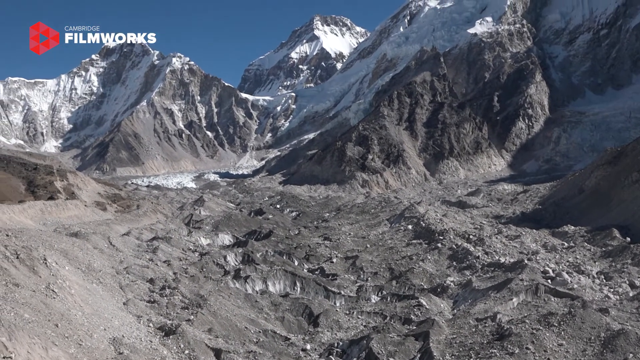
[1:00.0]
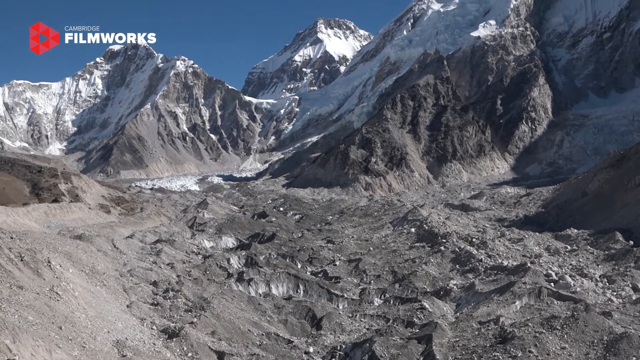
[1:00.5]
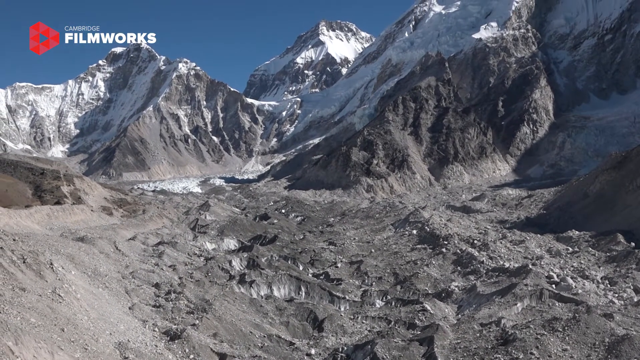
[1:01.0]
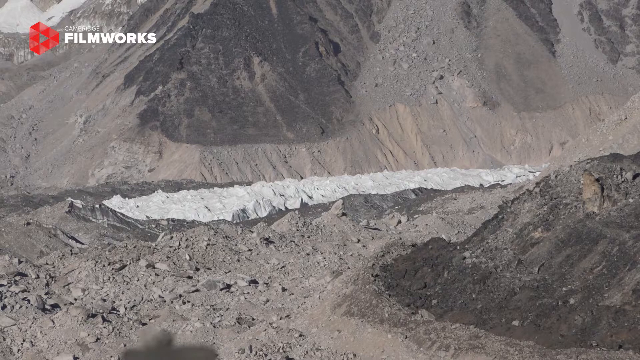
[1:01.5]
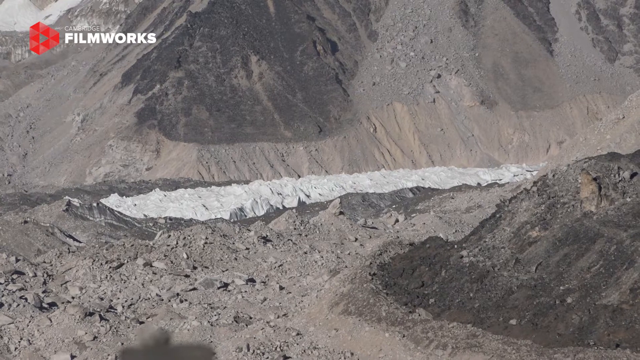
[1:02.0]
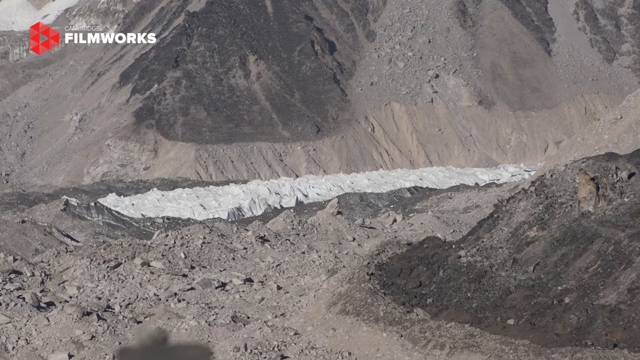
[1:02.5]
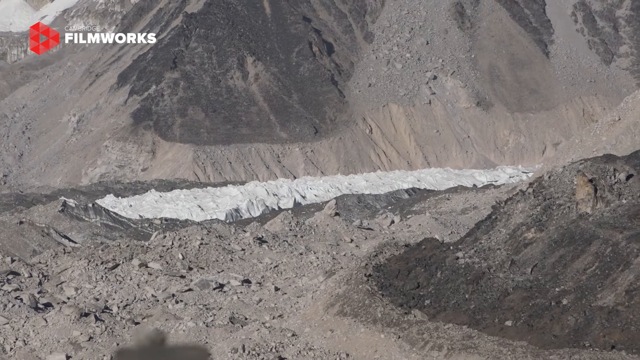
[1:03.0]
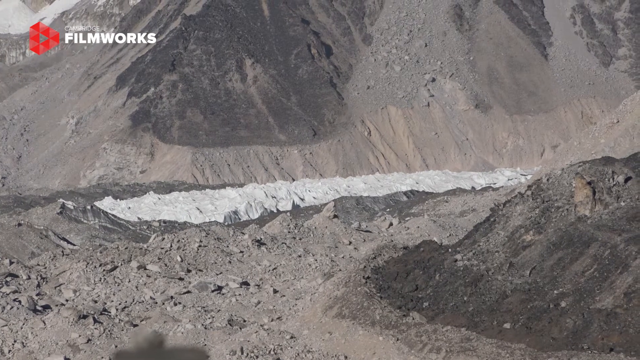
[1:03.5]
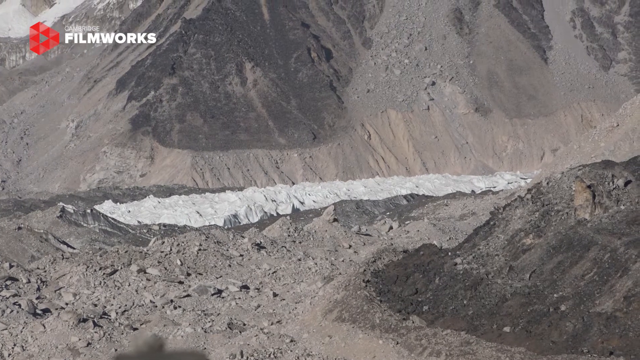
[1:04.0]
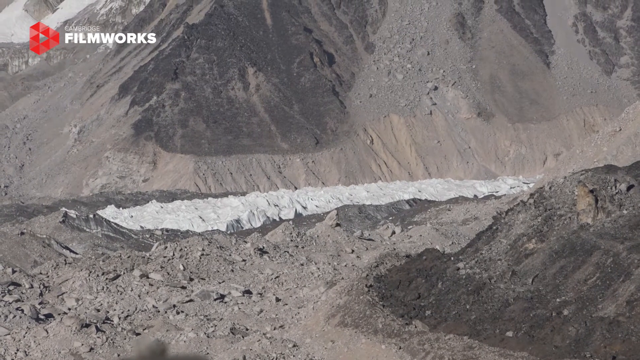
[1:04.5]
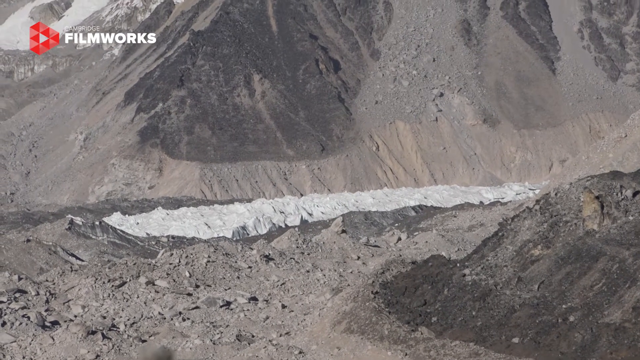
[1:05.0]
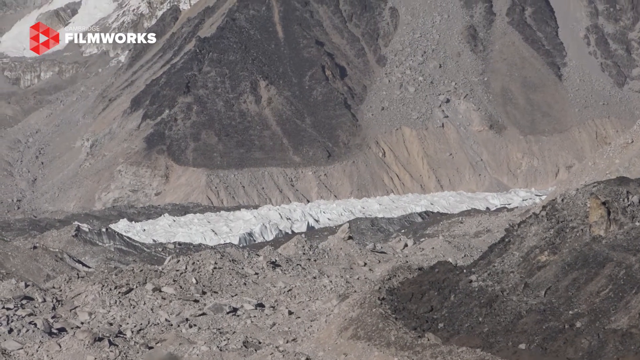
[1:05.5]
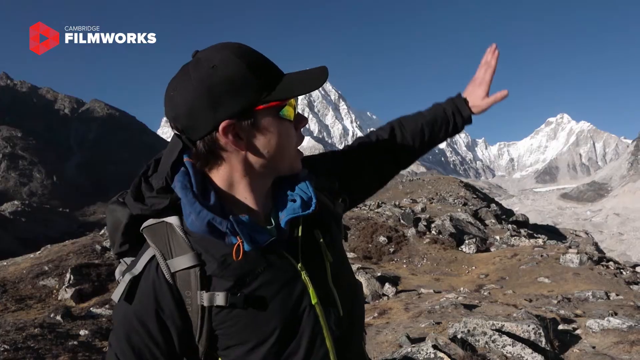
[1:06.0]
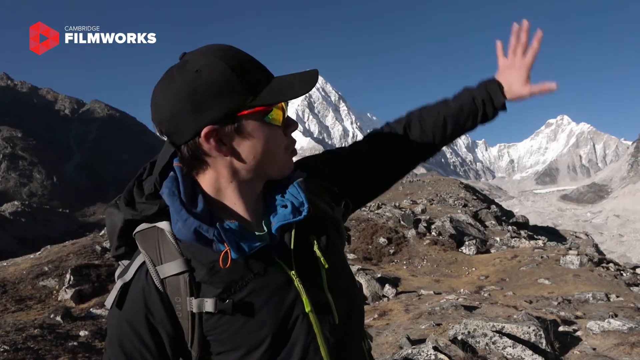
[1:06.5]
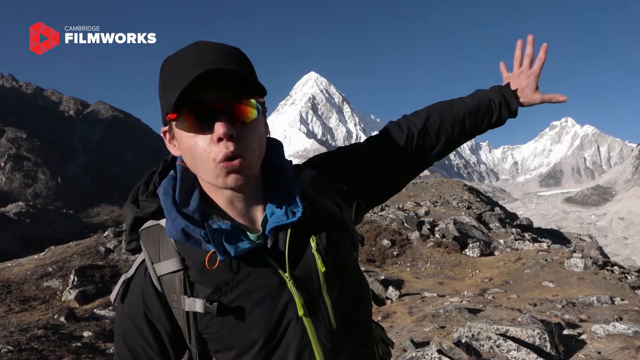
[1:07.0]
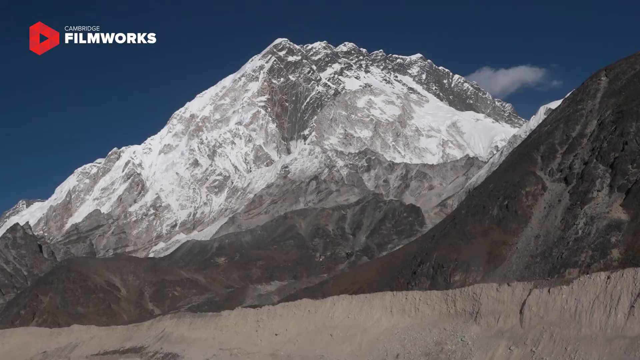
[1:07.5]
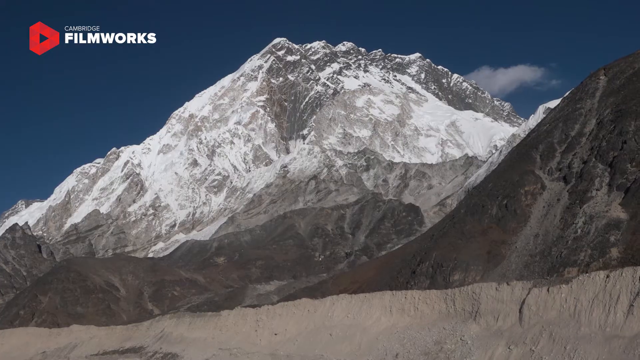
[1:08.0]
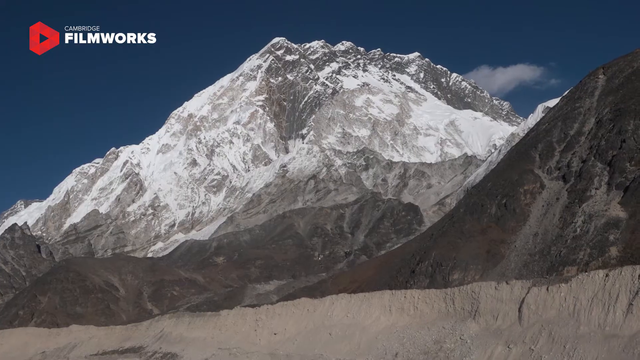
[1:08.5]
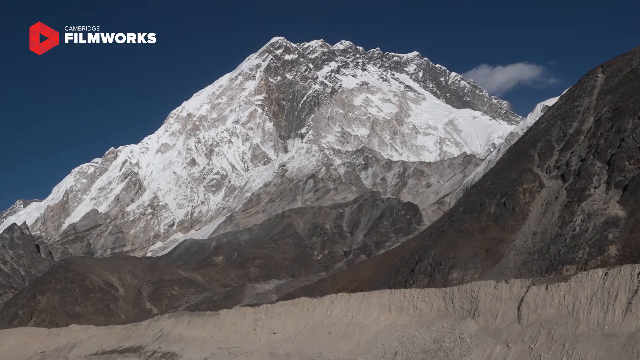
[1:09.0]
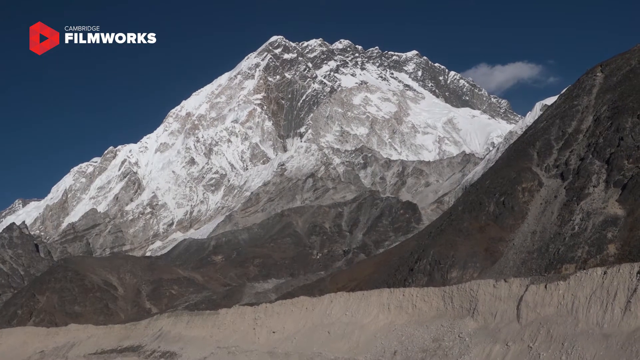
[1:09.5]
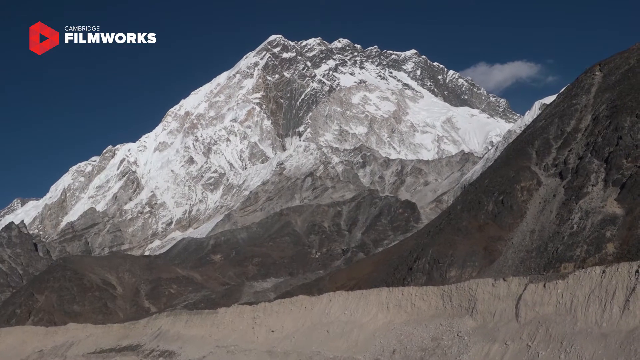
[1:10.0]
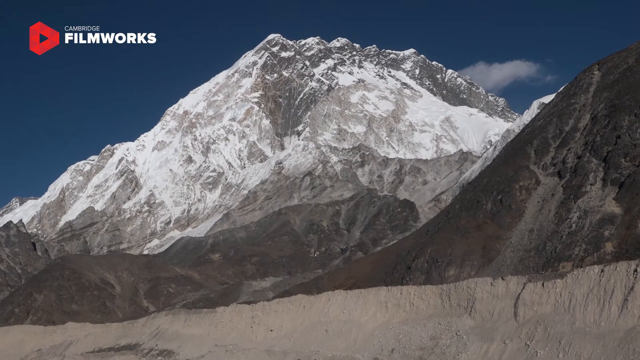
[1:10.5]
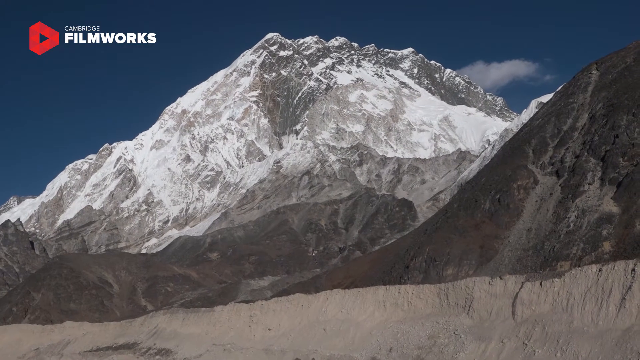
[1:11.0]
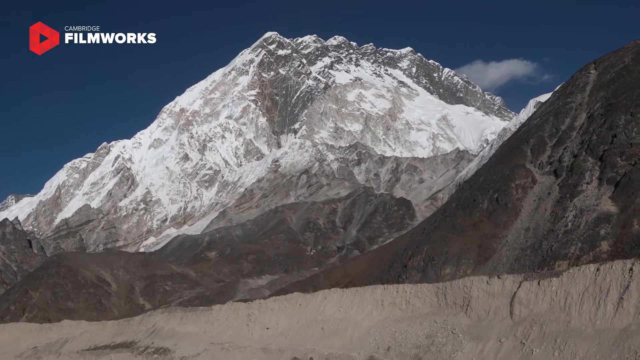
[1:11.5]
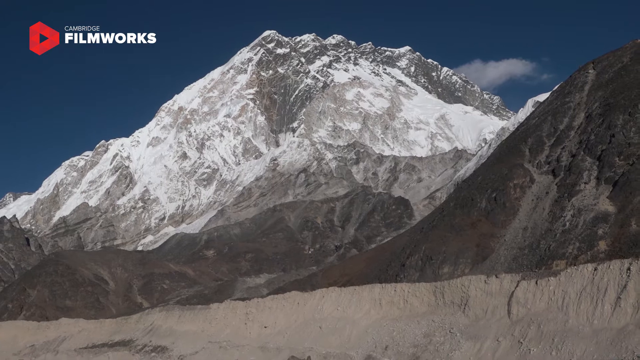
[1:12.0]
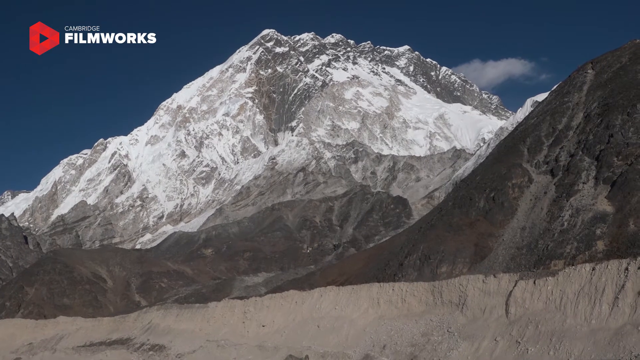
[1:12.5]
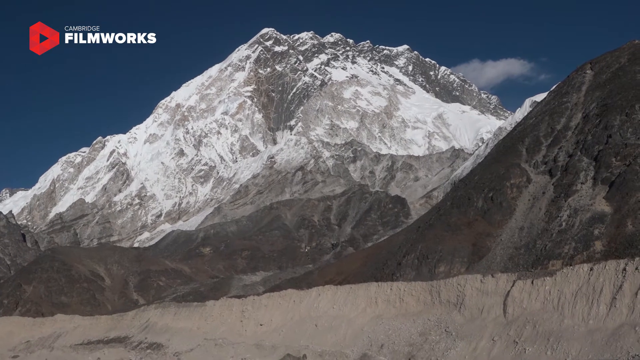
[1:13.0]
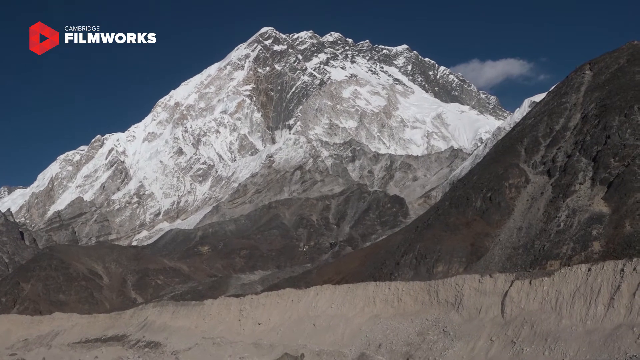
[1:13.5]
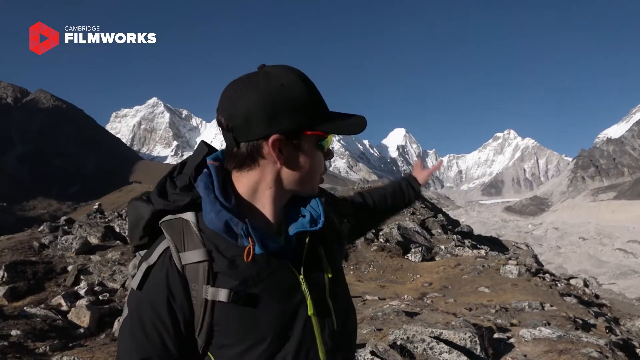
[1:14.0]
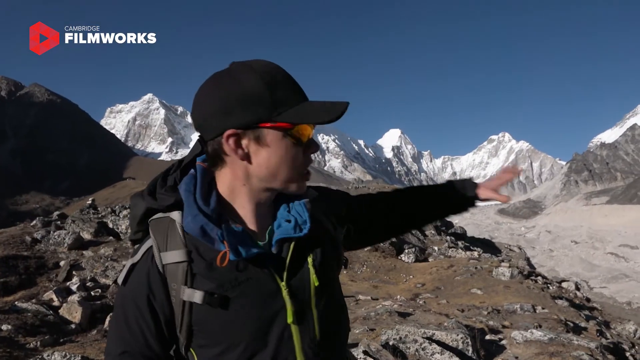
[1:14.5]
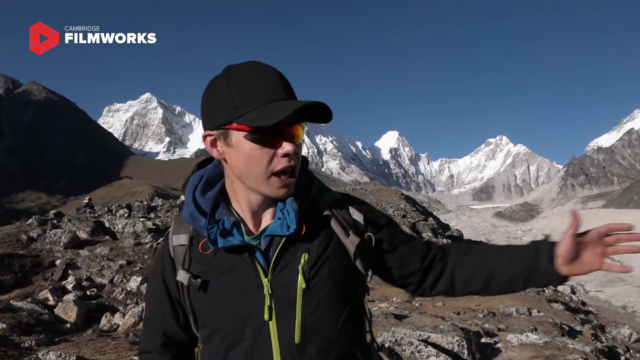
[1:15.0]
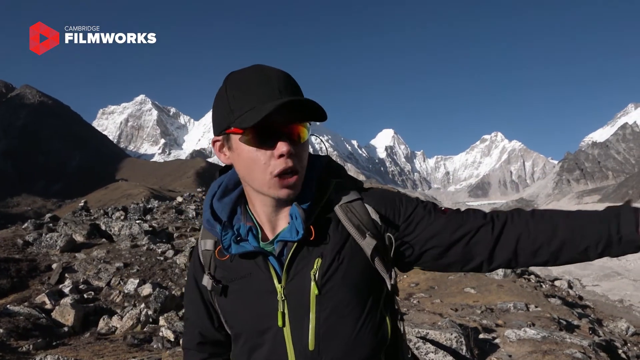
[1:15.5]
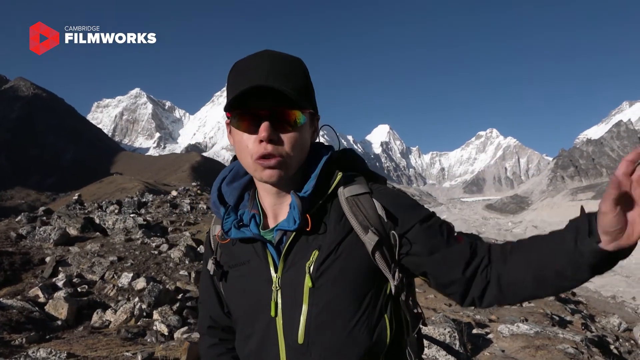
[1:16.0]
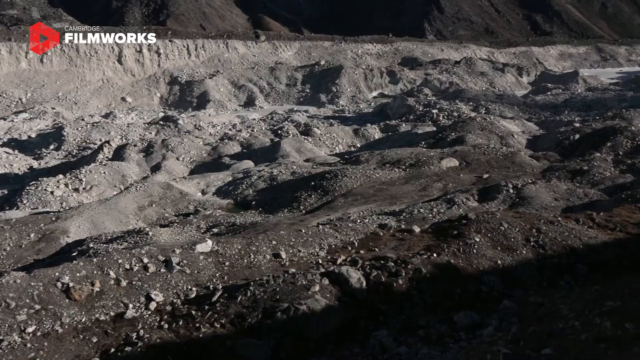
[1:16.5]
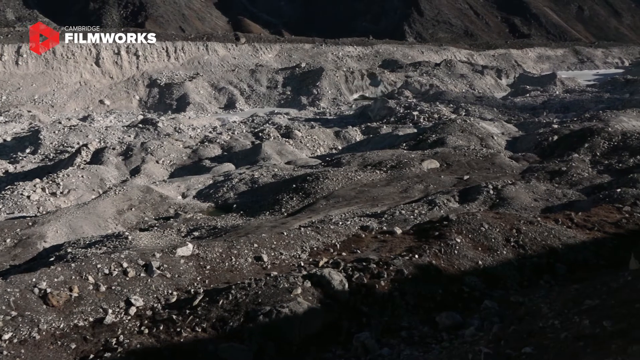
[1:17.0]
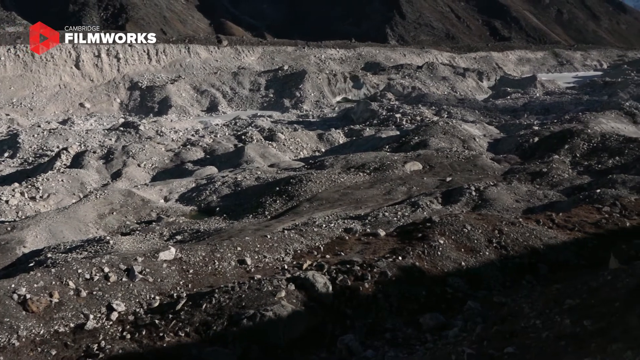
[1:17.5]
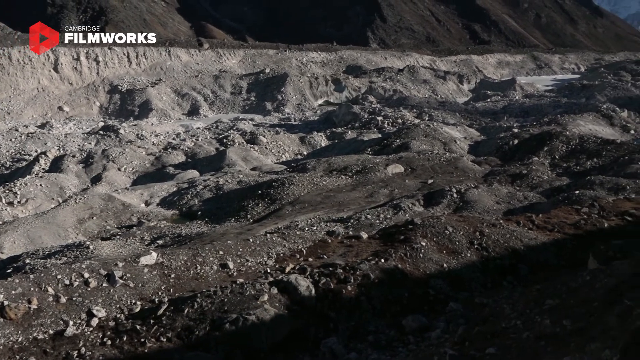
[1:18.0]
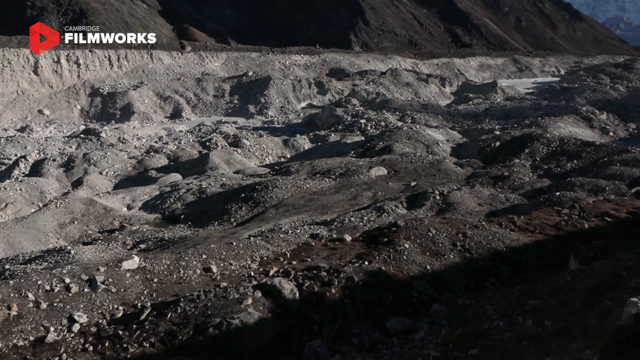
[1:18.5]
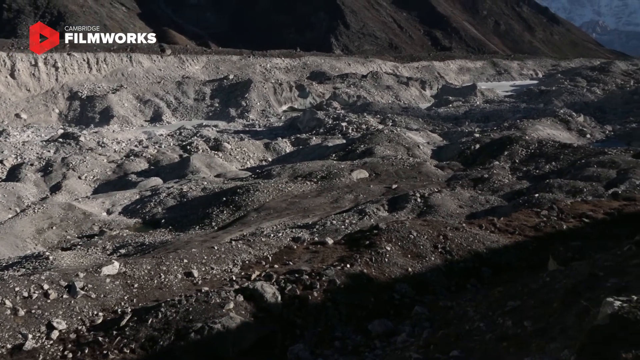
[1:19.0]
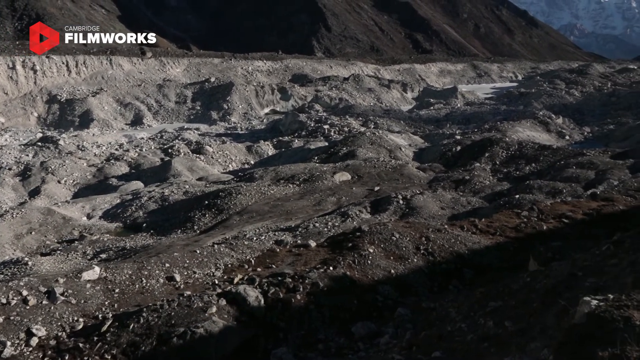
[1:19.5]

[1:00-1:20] The glacier valley below is shown, with uneven terrain. The video cuts to the same hiker, who points to another part of the mountain range behind him, showing the Mount Everest mountain range. Another shot shows a high point that is not exactly Mount Everest but one of the peaks there, and the camera stays on that spot for a few seconds. It cuts back to the hiker, who appears to be explaining something as he points at different parts of the mountain range behind him. Then it cuts to the glacier valley below, where this section has many pits and a naturally occurring raised wall, below which are pits and mounds of dirt and rocks stretching across the whole landscape, a very large area.